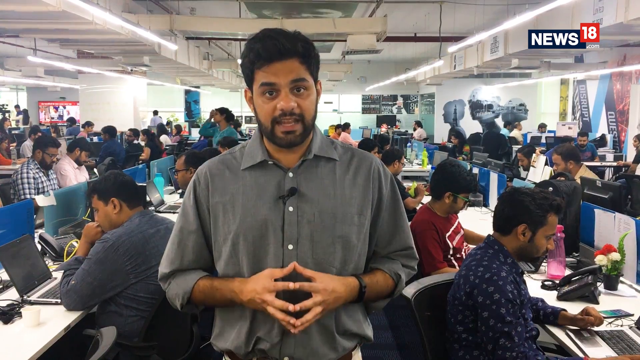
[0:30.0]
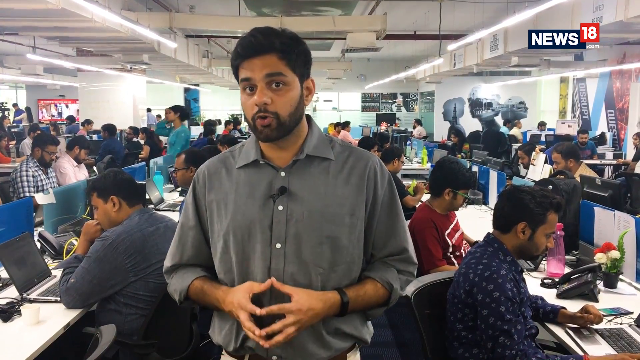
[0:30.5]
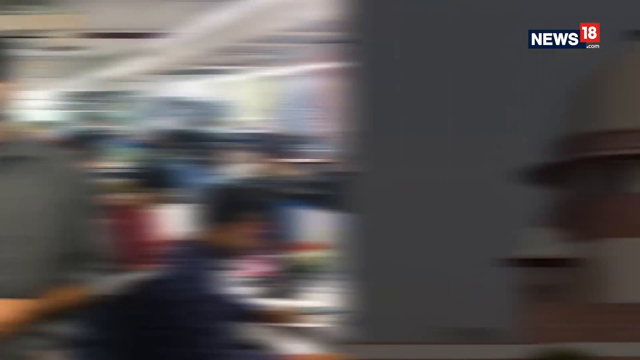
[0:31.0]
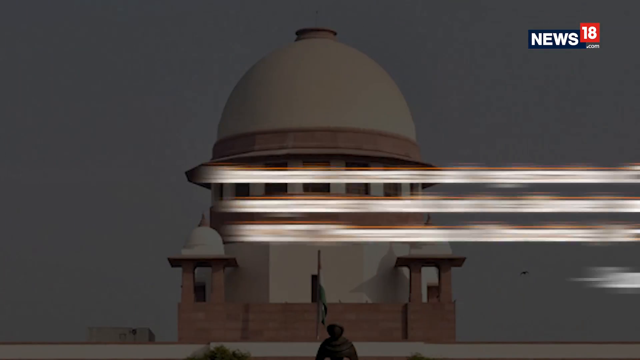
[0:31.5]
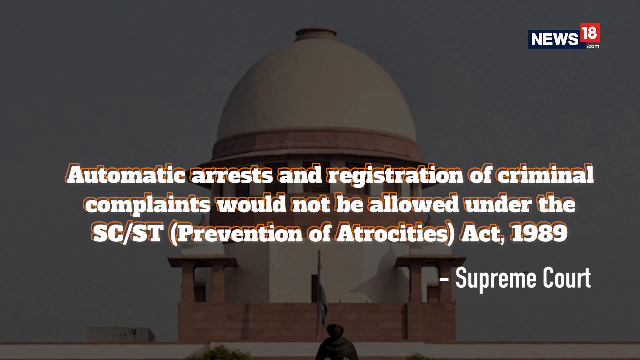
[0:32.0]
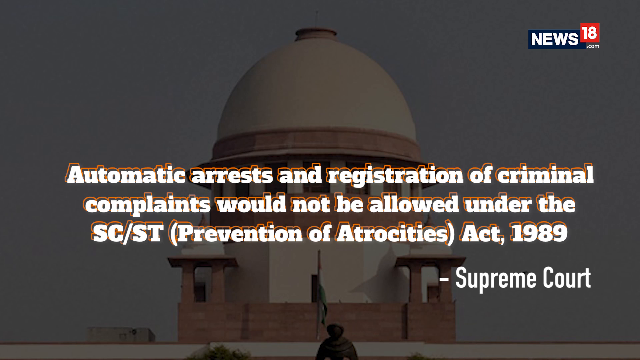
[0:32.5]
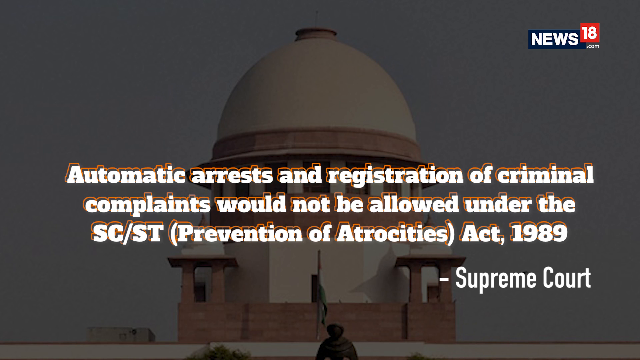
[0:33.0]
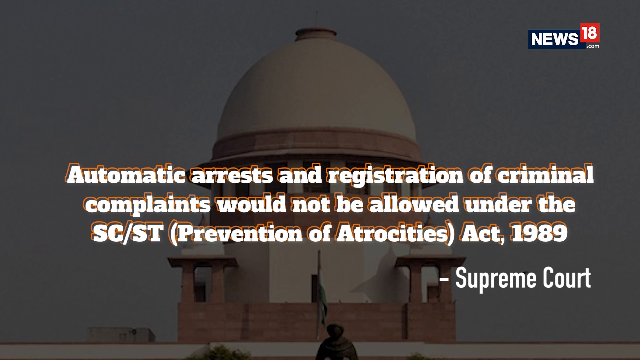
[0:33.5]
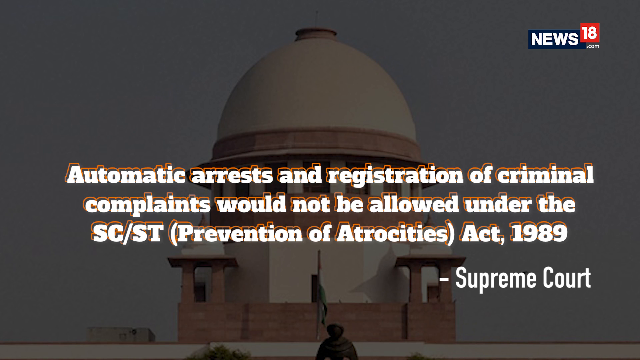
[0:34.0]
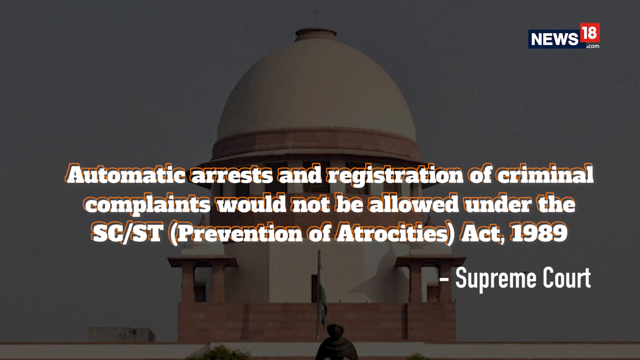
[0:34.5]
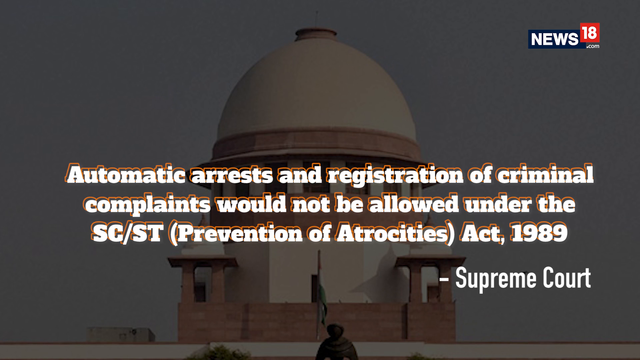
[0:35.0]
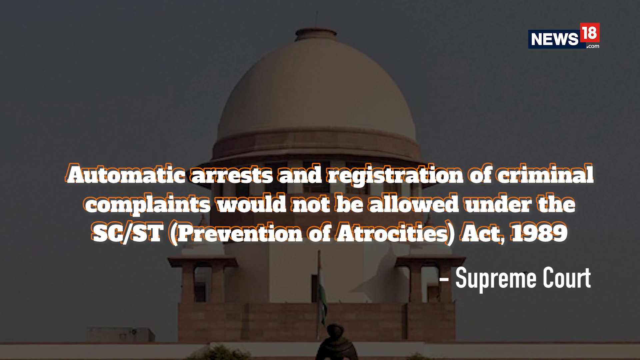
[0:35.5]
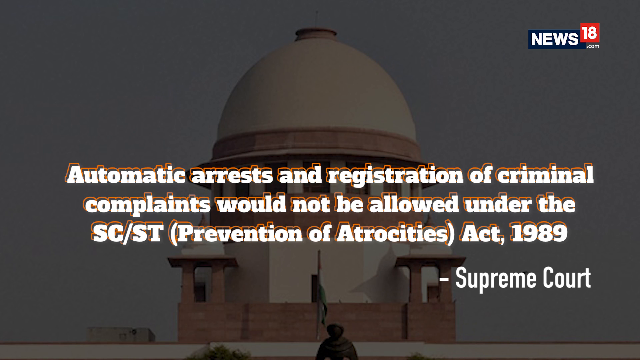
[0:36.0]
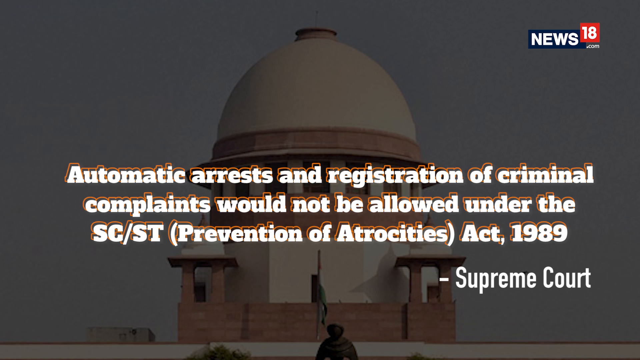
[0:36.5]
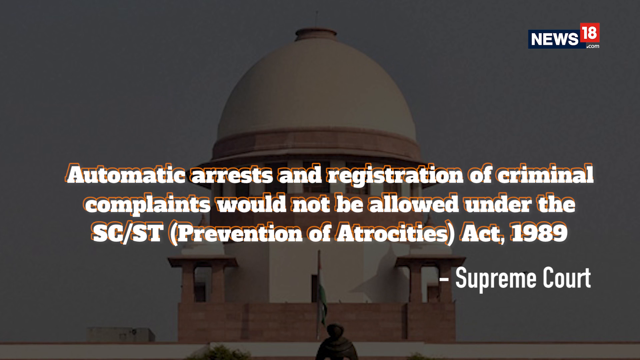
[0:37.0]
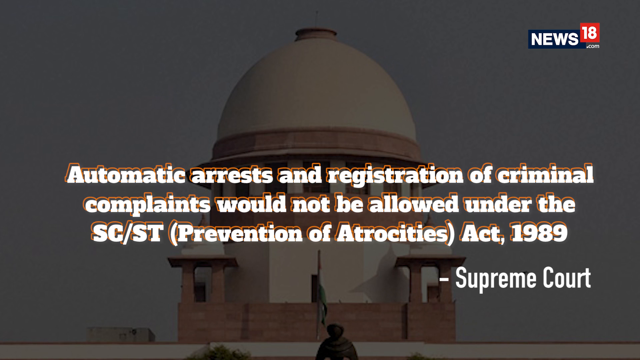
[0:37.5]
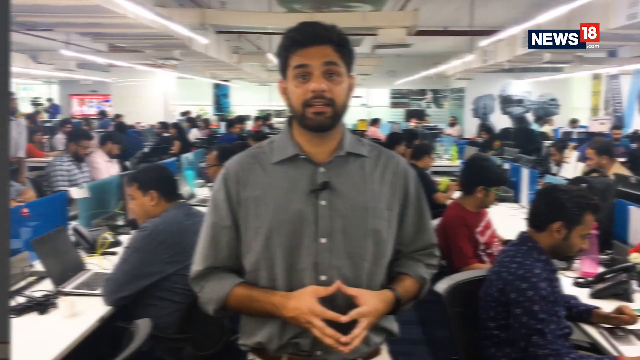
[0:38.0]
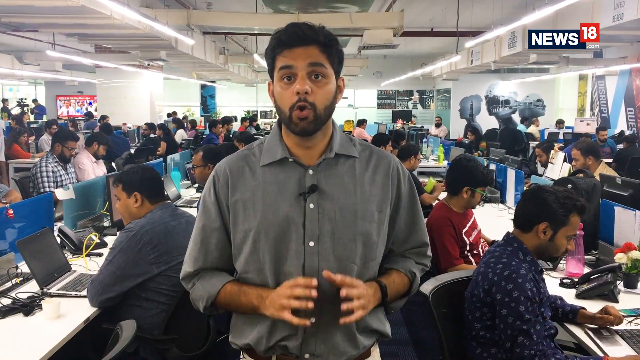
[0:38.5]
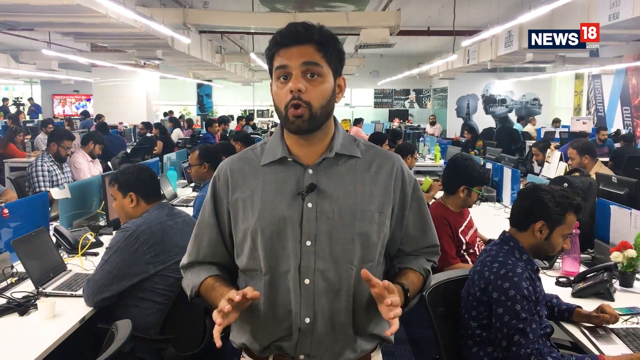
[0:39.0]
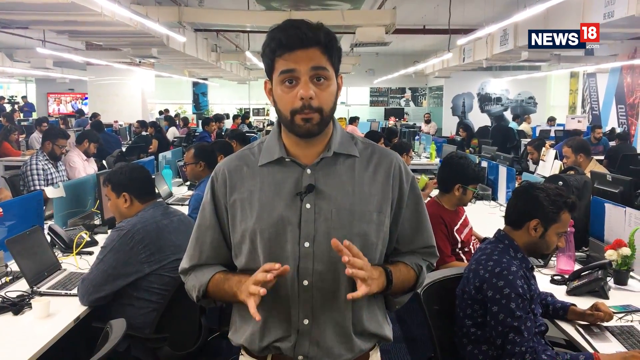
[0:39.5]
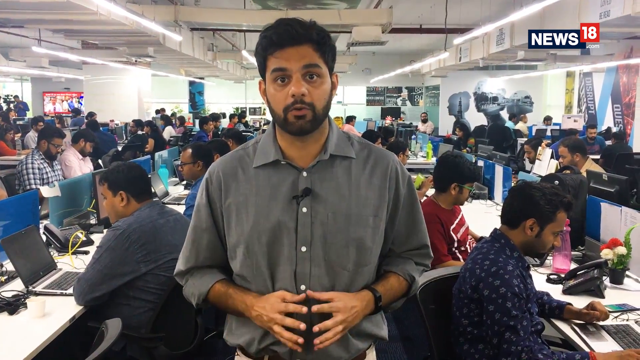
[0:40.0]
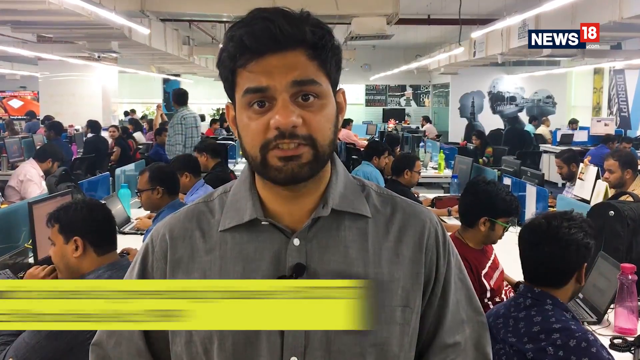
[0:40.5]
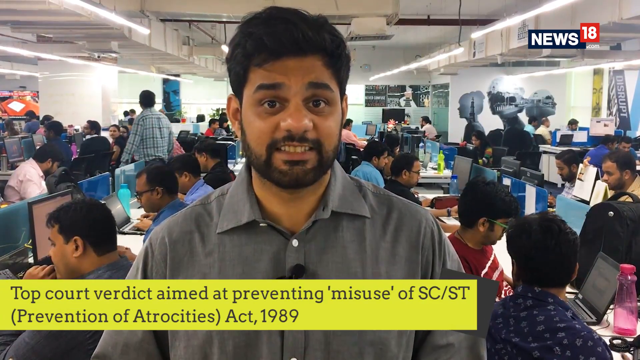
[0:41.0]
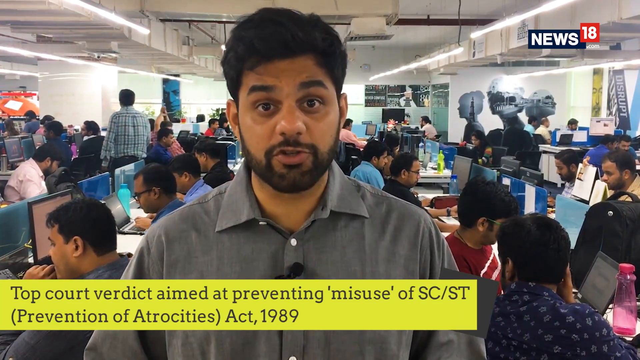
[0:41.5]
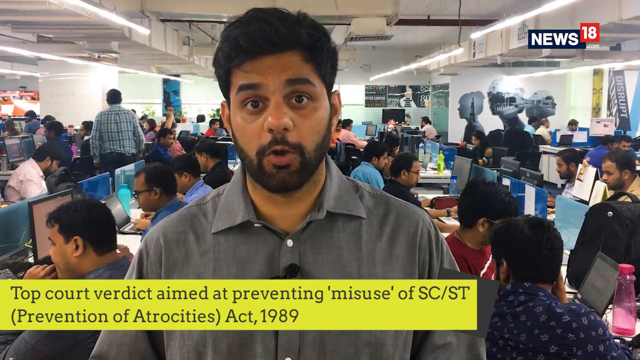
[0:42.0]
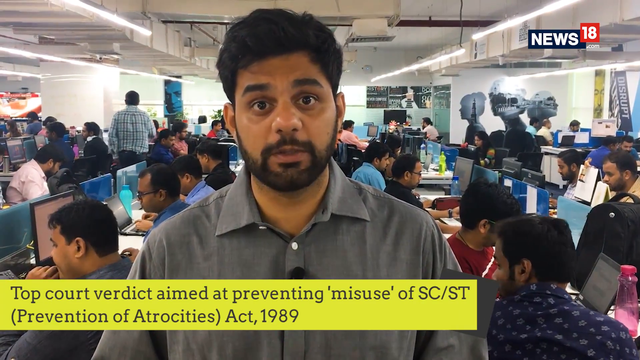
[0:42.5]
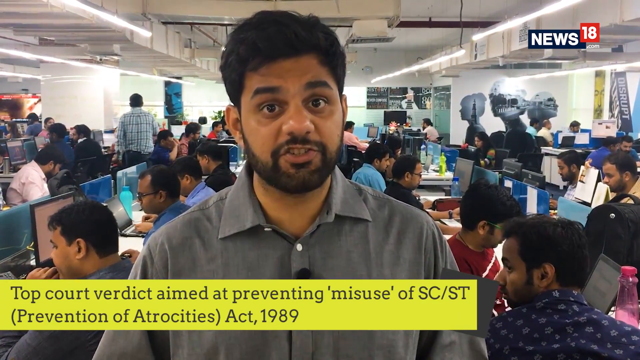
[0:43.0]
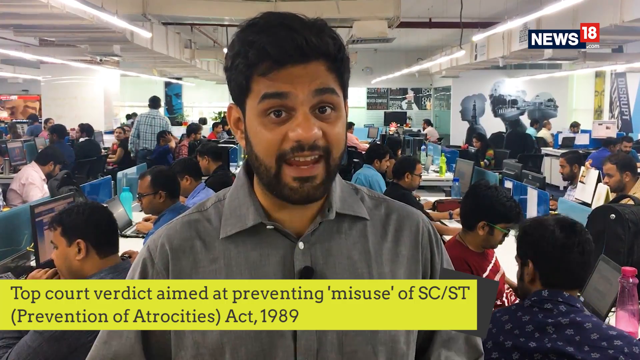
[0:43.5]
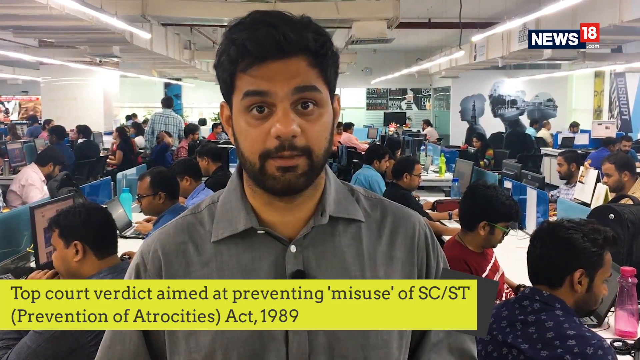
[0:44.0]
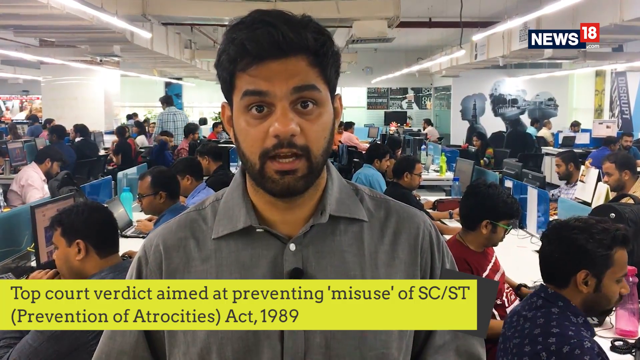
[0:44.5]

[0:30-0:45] The video, by News18, is titled Bharat Bandh, Why Dalits Took to the Streets in Protest. A newscaster appears in a newsroom, then a building is shown with a text overlay reading "automatic arrests and registration of criminal complaints would not be allowed under the SC-ST Prevention of Atrocities Act, 1989", referring to the Supreme Court, apparently in India. The video returns to the newscaster in the news office with text at the bottom reading "top court verdict aimed at preventing misuse of SC-ST Prevention of Atrocities Act, 1989". It then cuts back and forth between these two scenes.